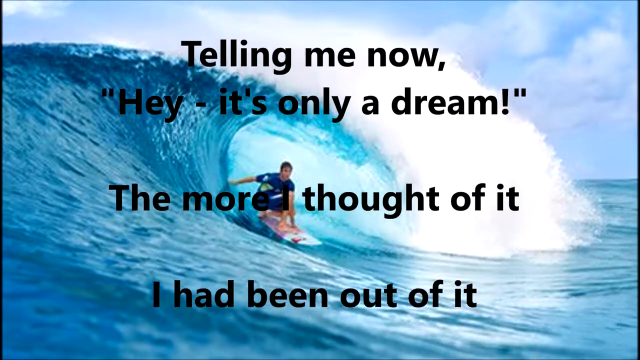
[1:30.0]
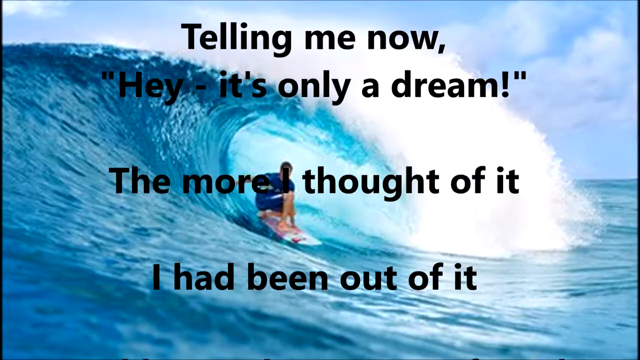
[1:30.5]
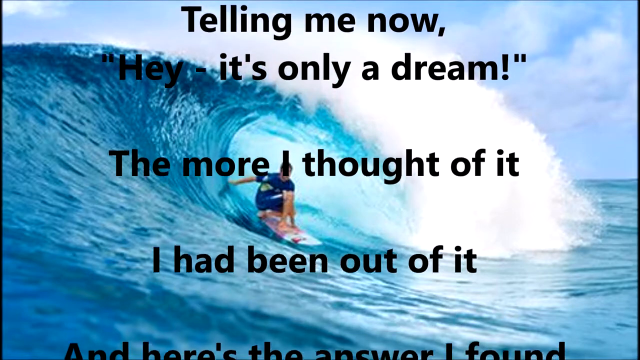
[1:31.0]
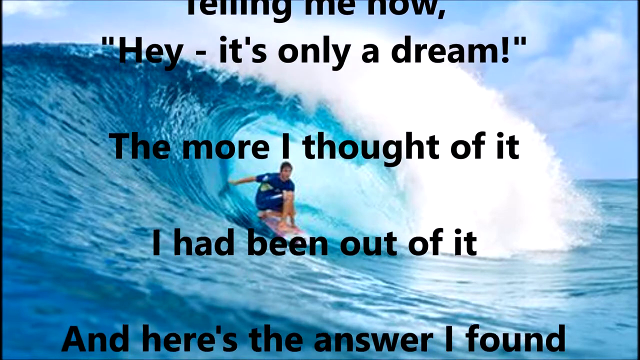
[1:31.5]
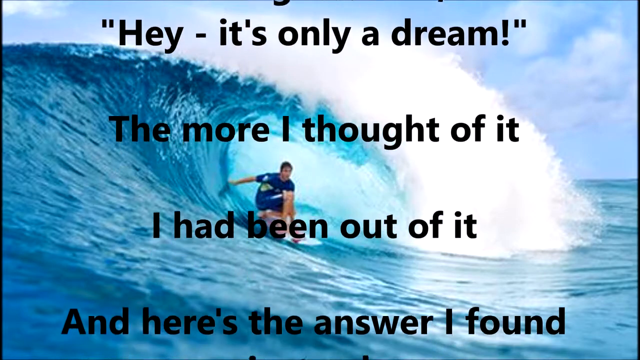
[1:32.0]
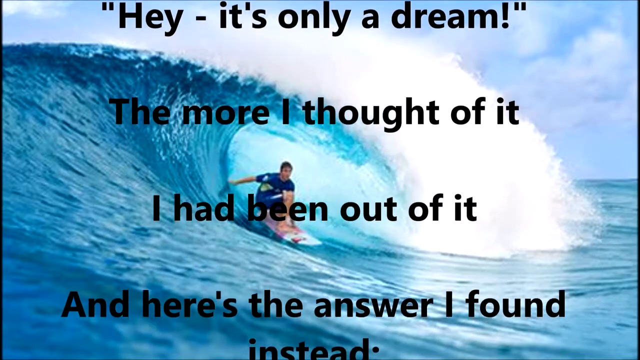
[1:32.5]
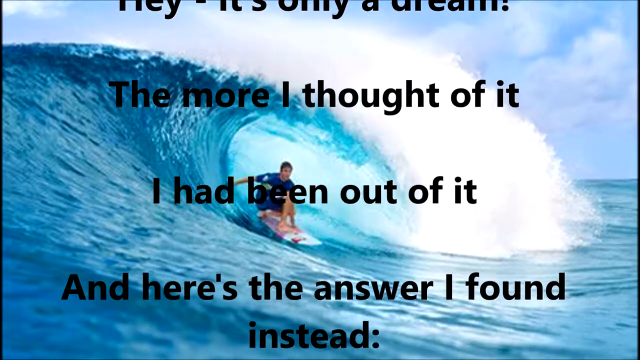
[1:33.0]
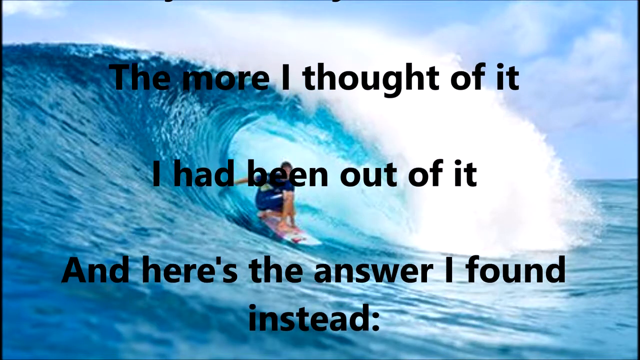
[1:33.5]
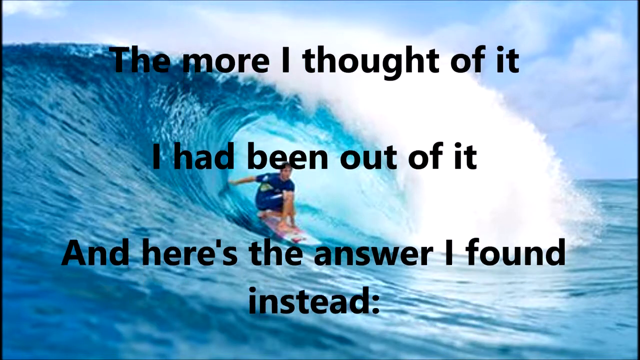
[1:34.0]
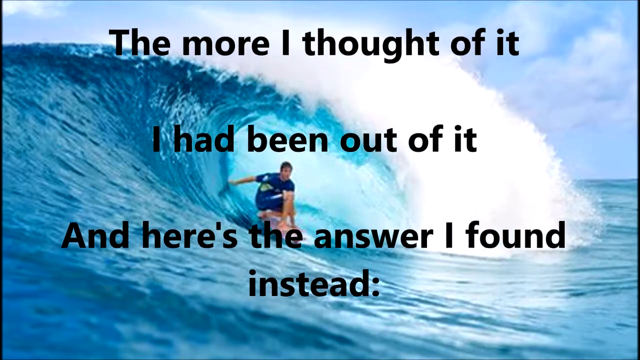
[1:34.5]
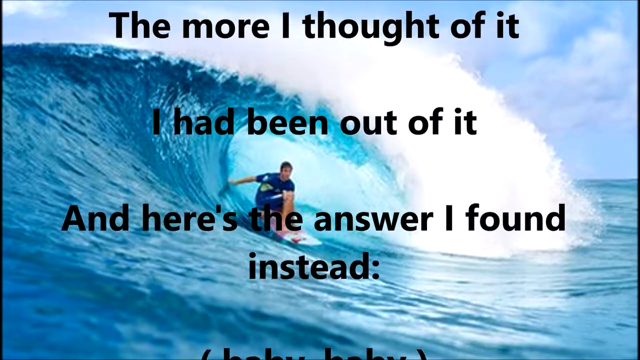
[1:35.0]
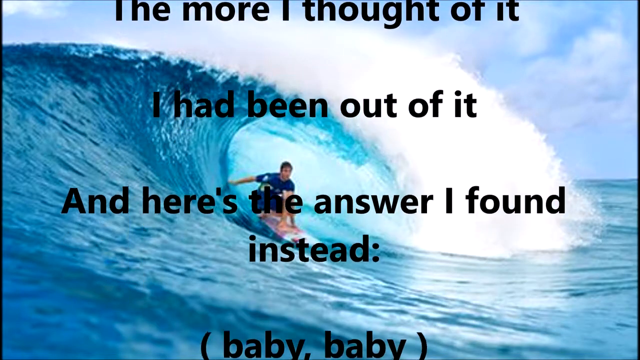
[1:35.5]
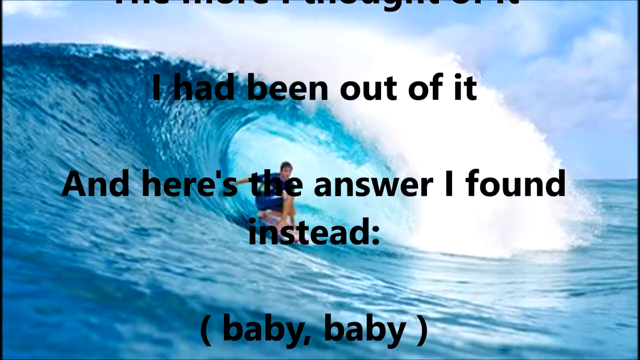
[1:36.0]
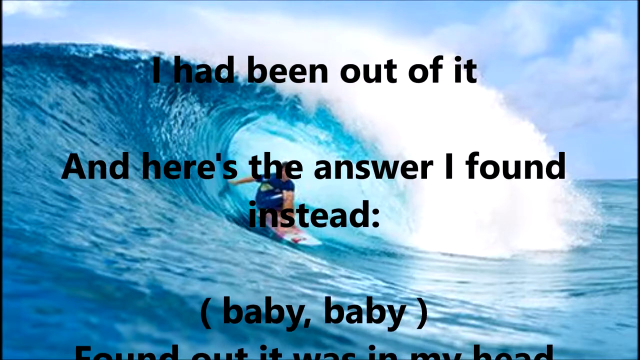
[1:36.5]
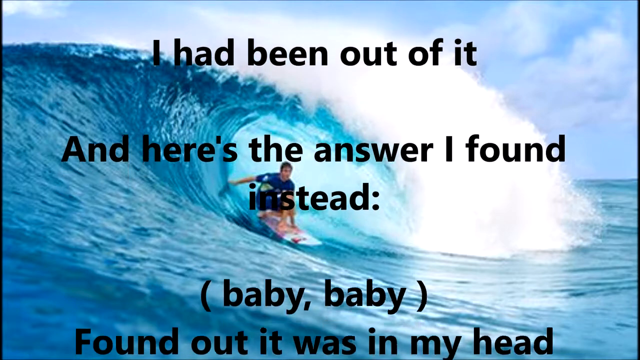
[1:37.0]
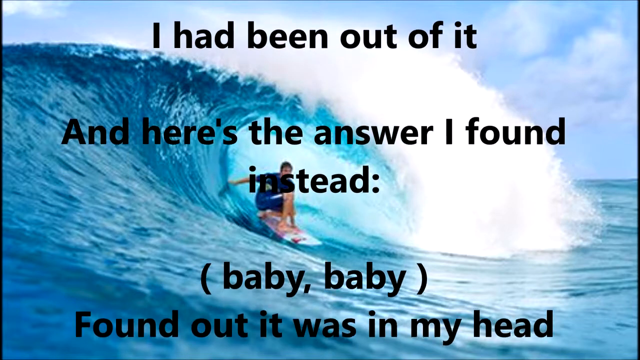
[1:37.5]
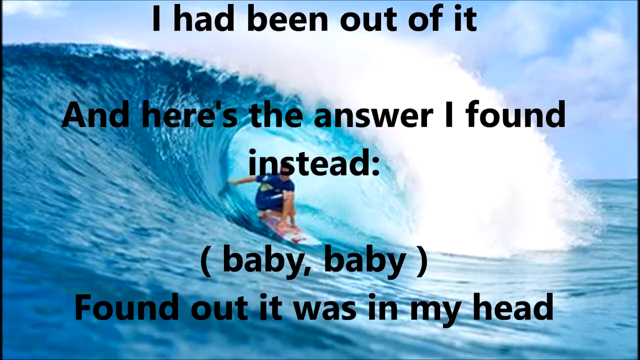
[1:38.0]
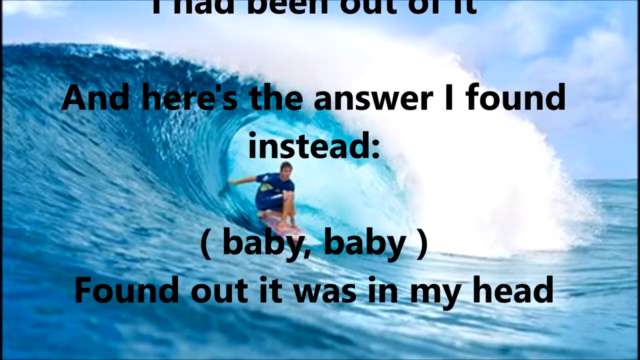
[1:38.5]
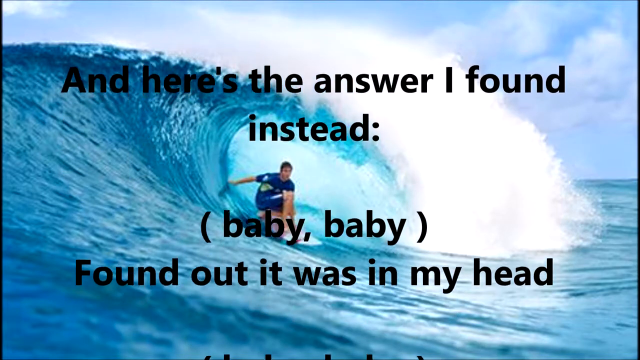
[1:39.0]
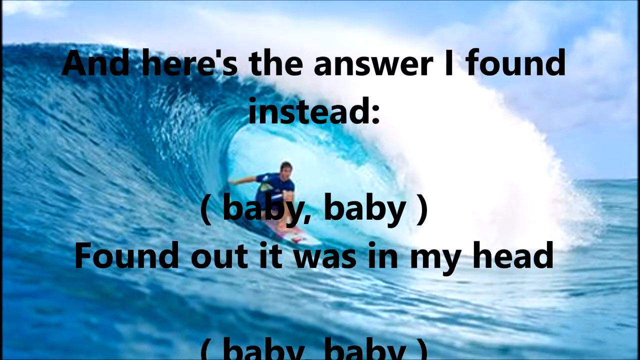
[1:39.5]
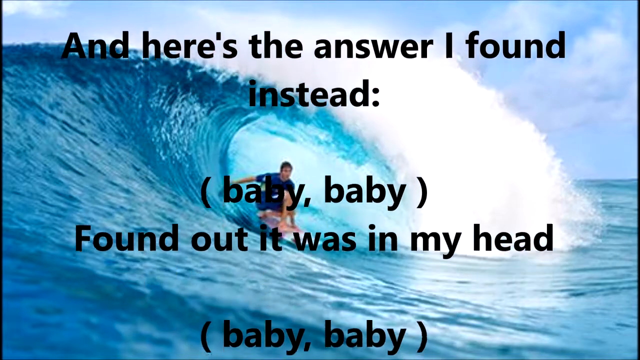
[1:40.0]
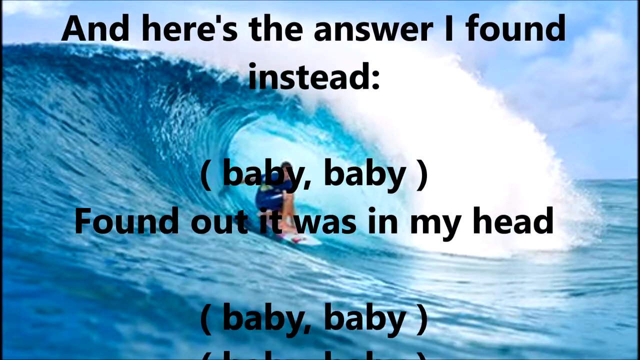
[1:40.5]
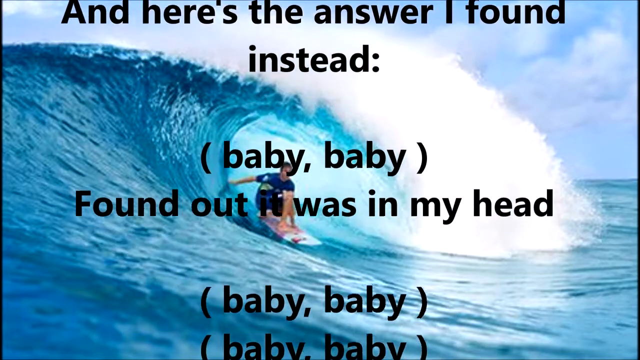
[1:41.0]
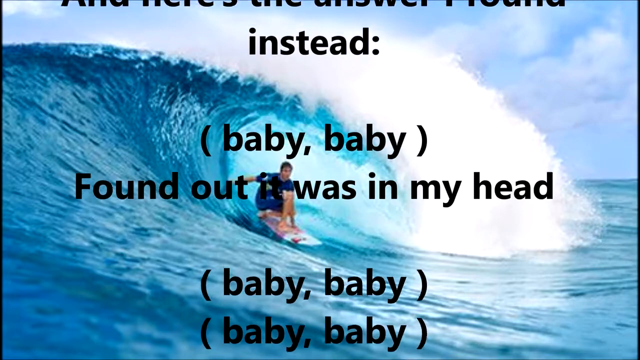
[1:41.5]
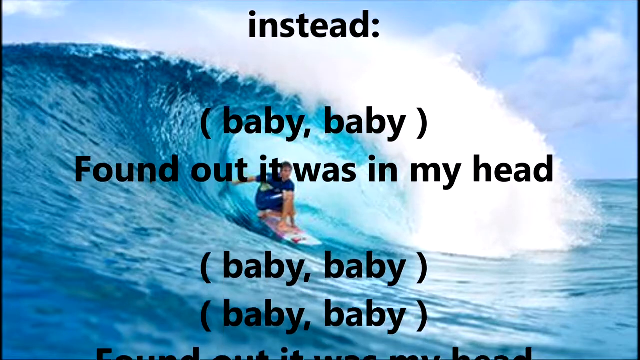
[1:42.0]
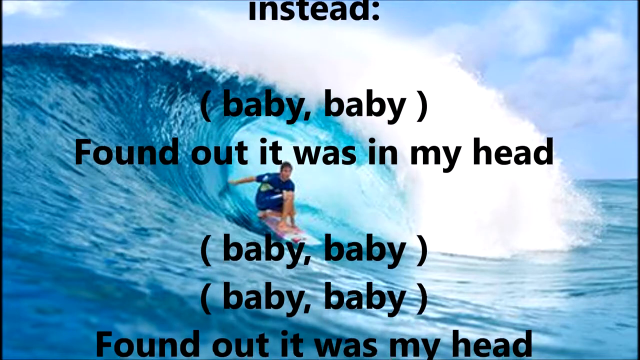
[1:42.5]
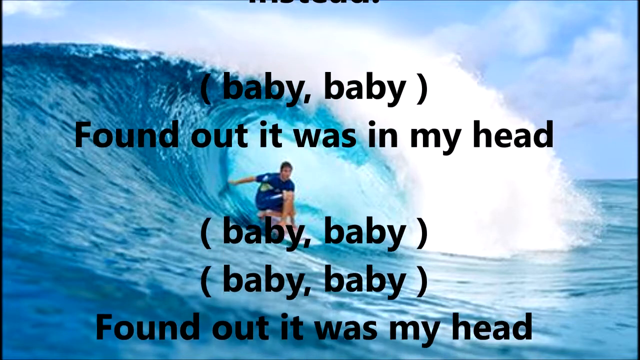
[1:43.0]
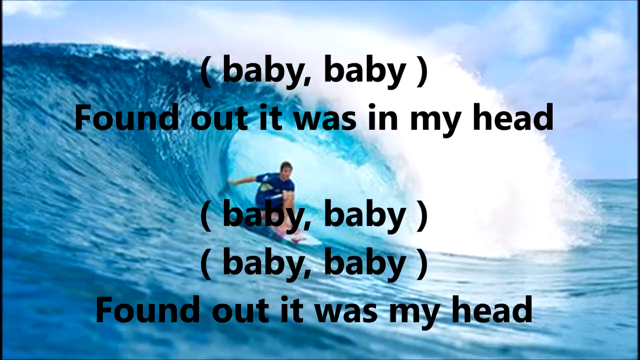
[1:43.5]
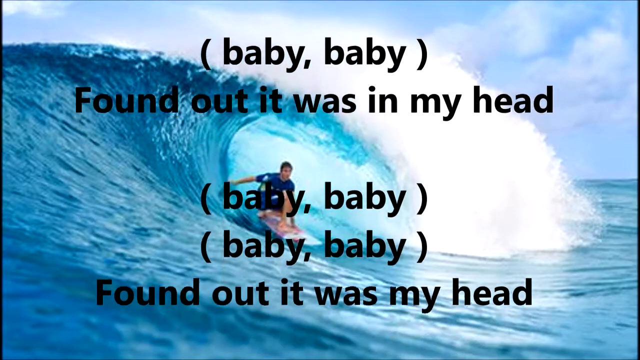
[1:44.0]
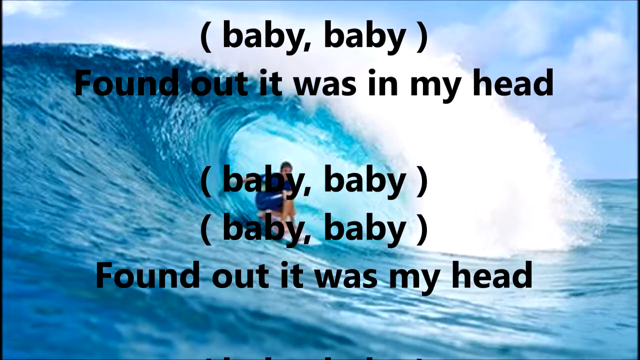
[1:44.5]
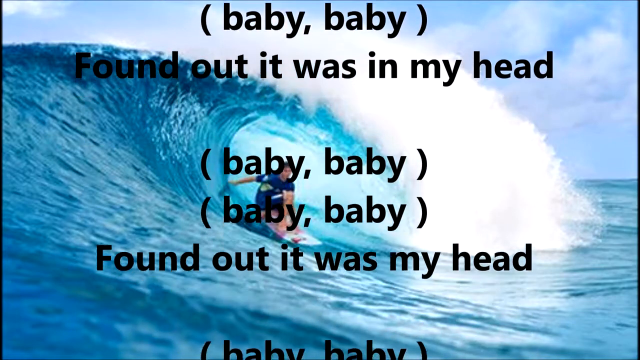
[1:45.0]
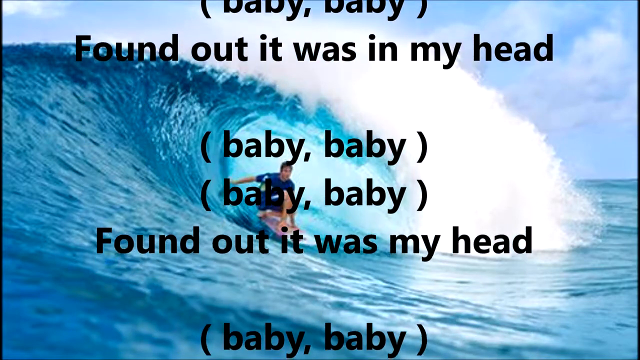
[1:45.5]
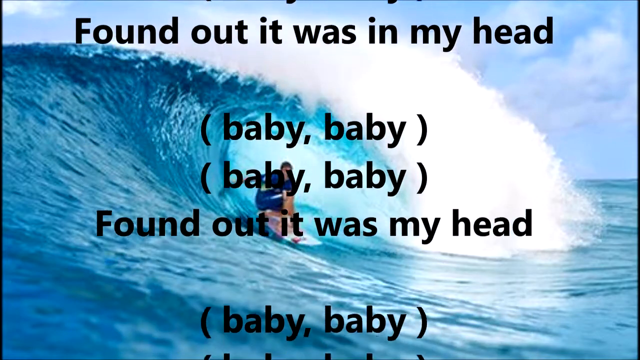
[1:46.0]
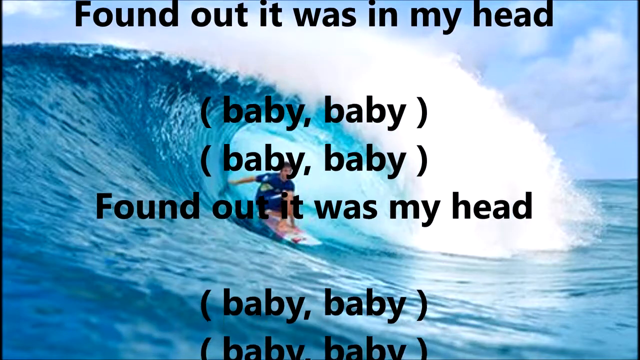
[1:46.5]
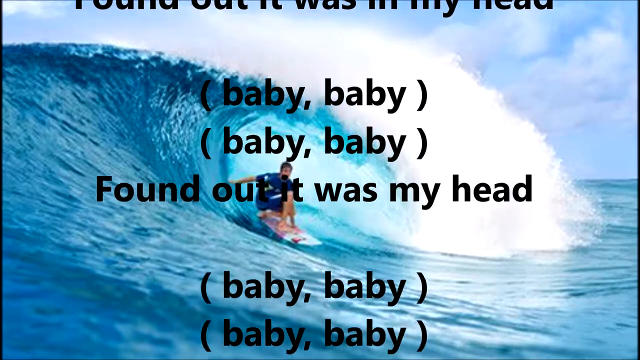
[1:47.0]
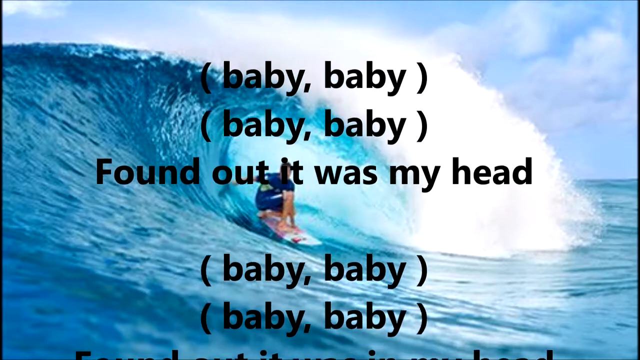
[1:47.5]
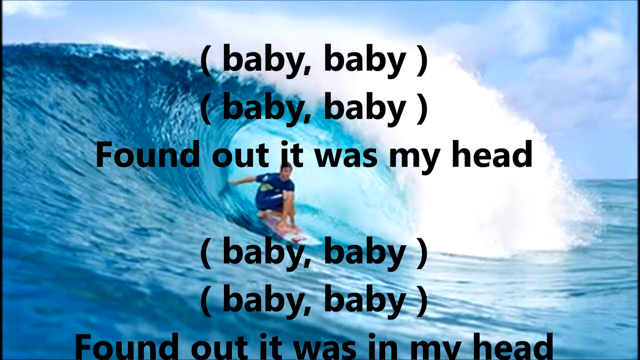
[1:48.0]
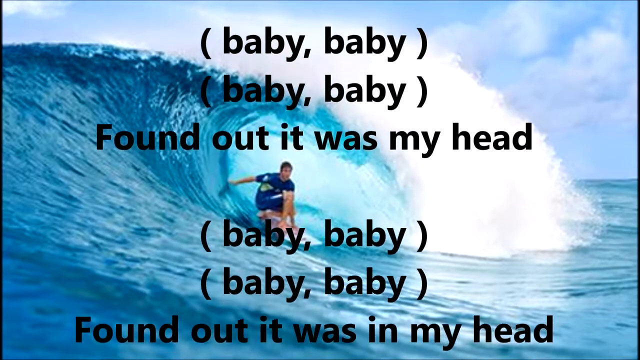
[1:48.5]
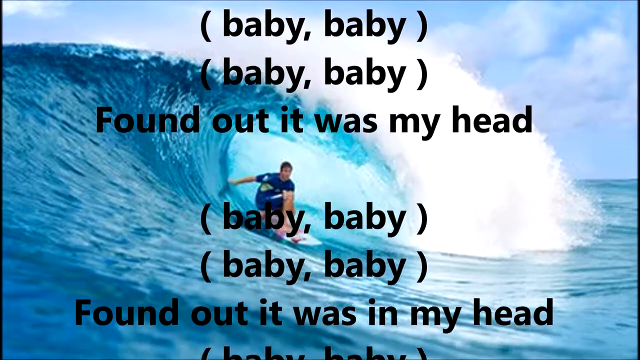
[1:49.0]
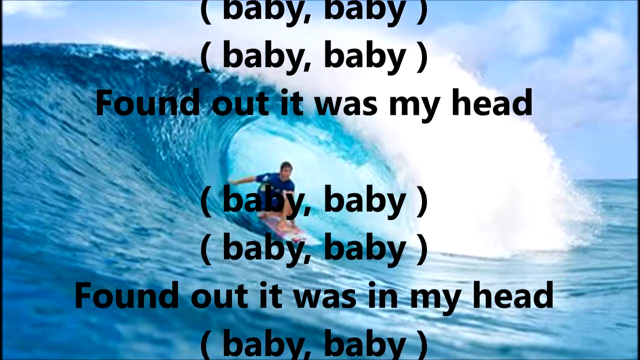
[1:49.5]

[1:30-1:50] The next lyrics read "and here's the answer I found instead," followed by "baby baby" in parentheses, then "found out it was in my head," then "baby baby" in parentheses, another parenthetical "baby baby," and "found out it was in my head." Another set of parentheses with "baby baby" and "baby baby" sits right on top of the lyric that follows, seemingly as simultaneous background lyrics. "found out it was in my head" appears again, with another parenthetical "baby baby" under it. At the bottom of the screen, the wave slants upward as it goes into the curl the surfer rides through, almost forming a diagonal line toward the center of the photo. The surfer's surfboard is white and red and looks like it might have some kind of logo on it. He has his left arm extended into the wave as he rides through it.